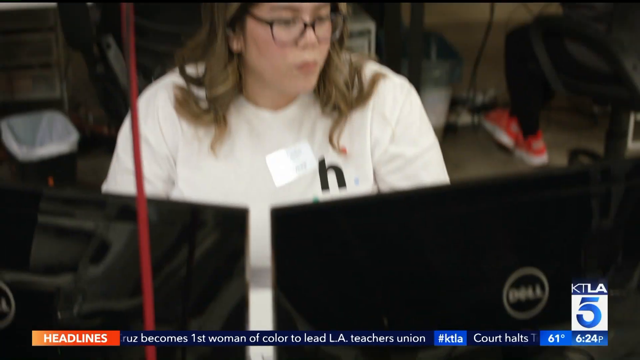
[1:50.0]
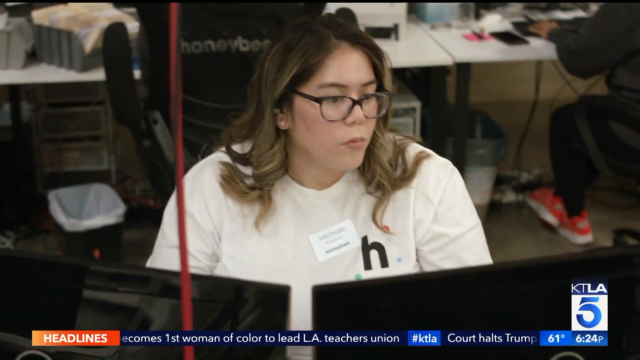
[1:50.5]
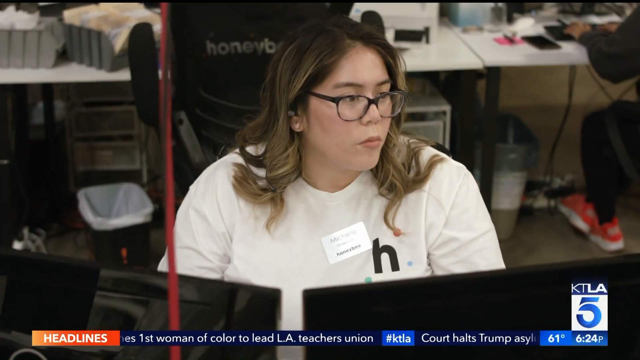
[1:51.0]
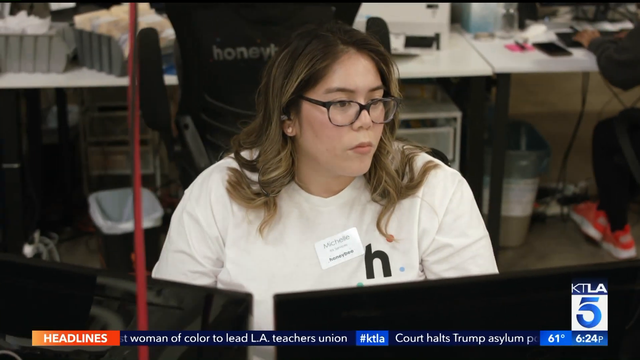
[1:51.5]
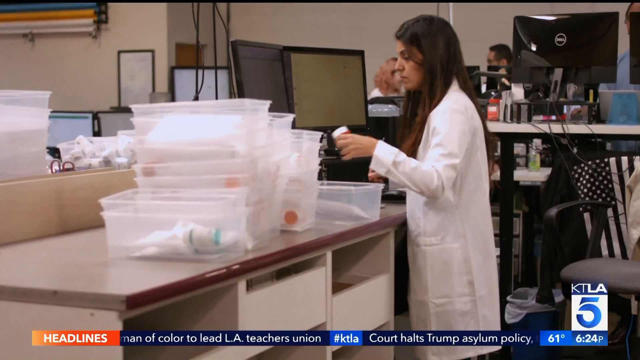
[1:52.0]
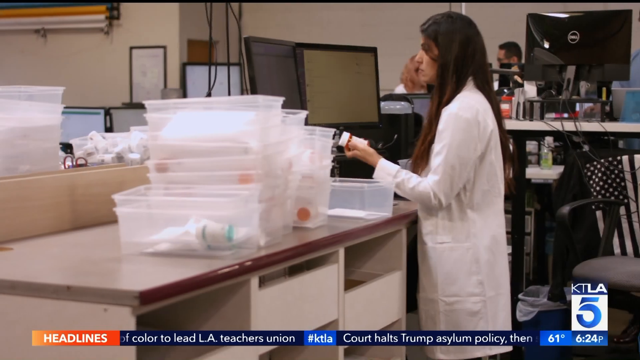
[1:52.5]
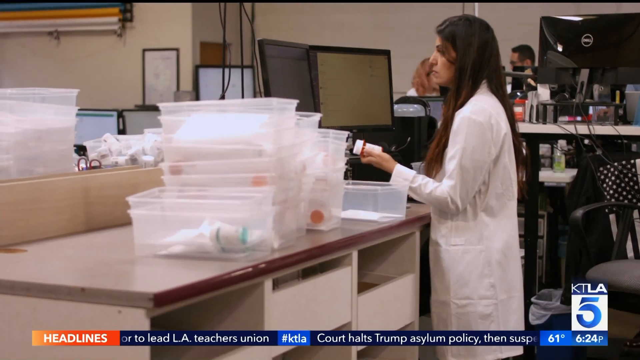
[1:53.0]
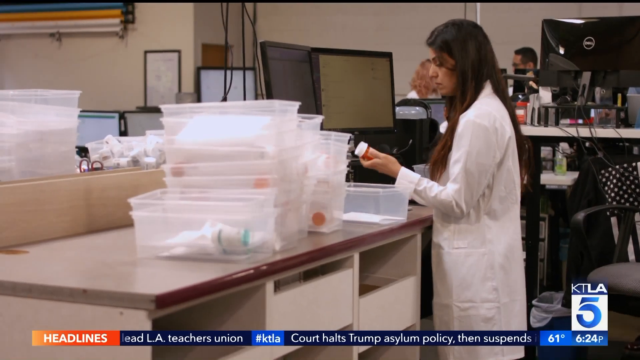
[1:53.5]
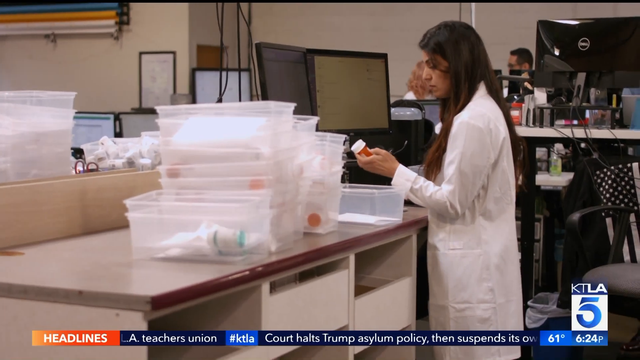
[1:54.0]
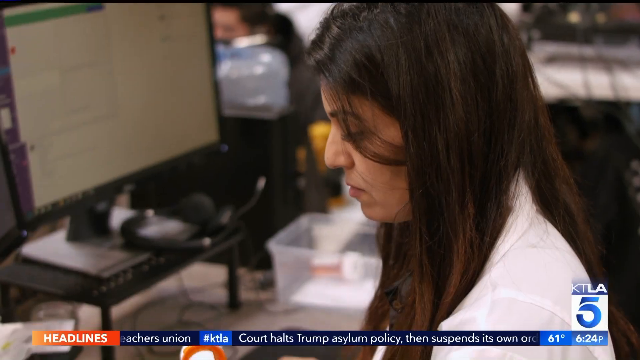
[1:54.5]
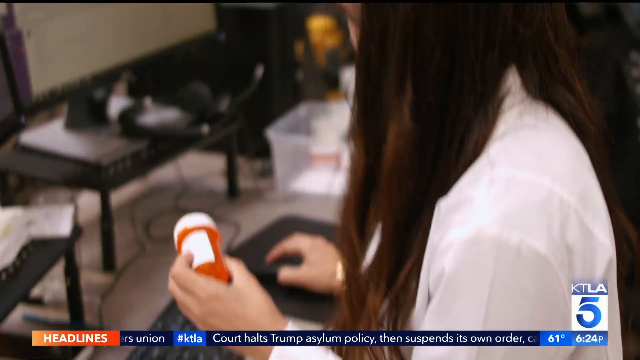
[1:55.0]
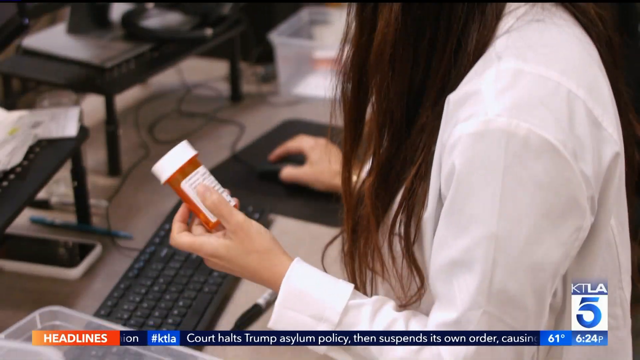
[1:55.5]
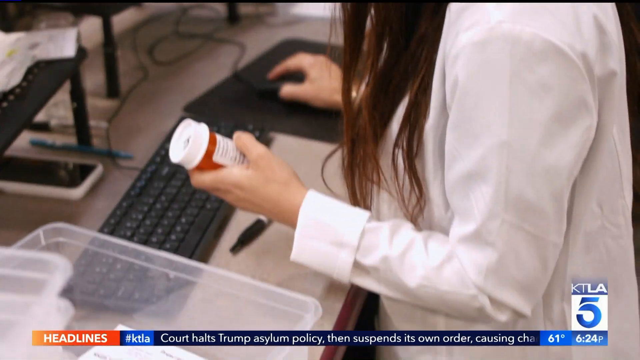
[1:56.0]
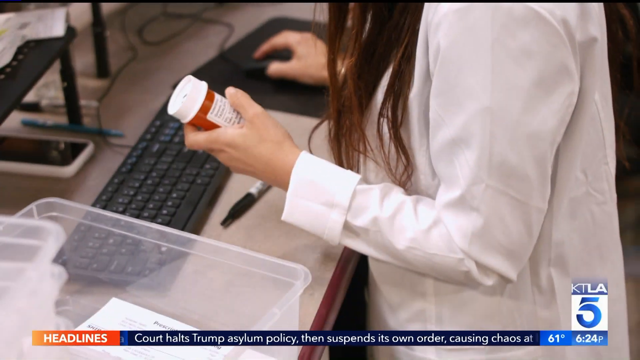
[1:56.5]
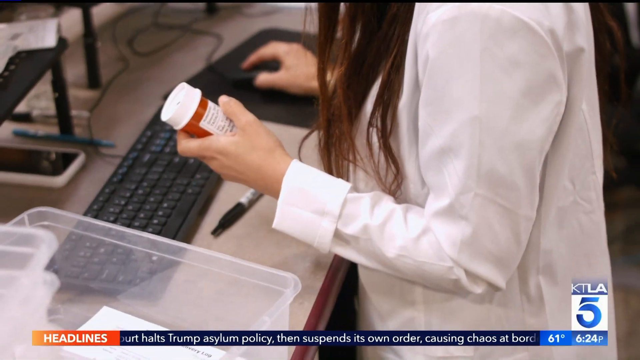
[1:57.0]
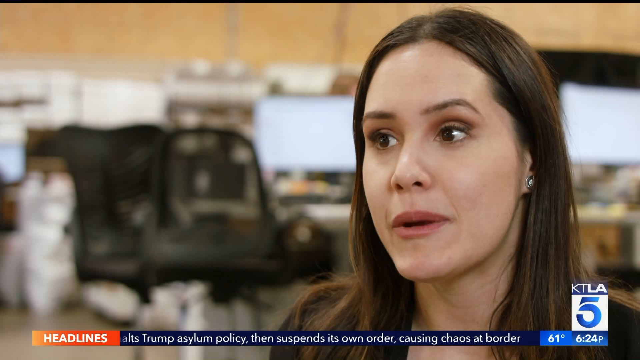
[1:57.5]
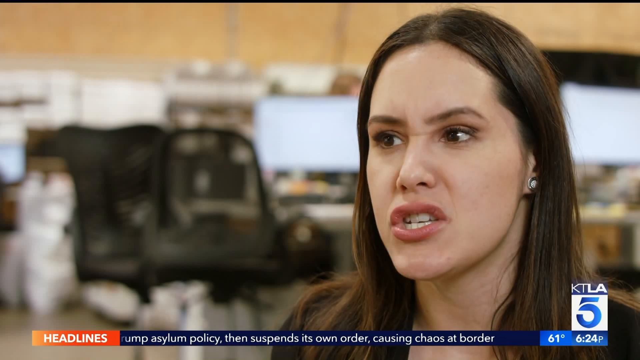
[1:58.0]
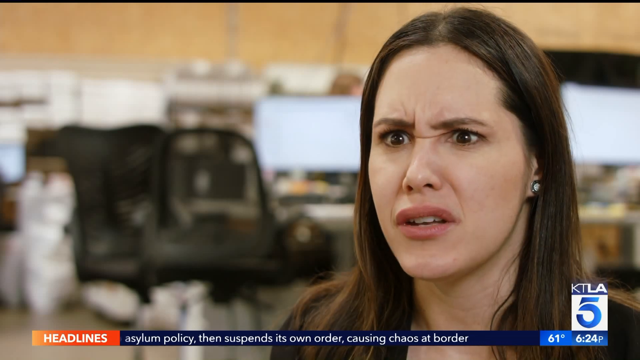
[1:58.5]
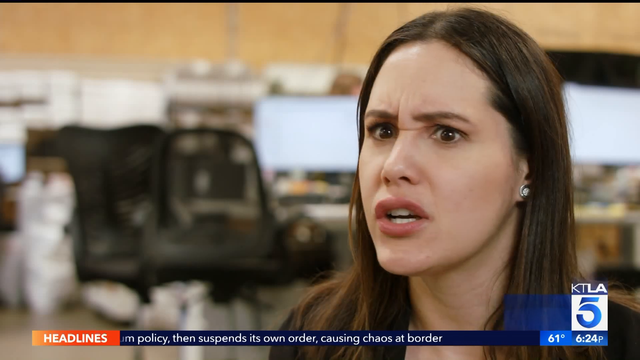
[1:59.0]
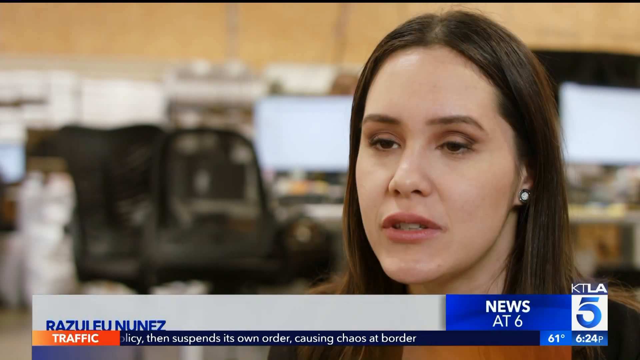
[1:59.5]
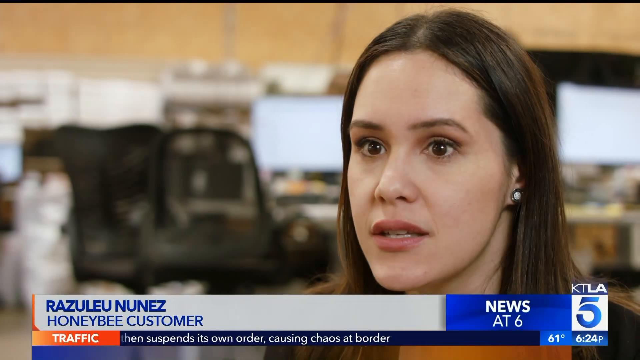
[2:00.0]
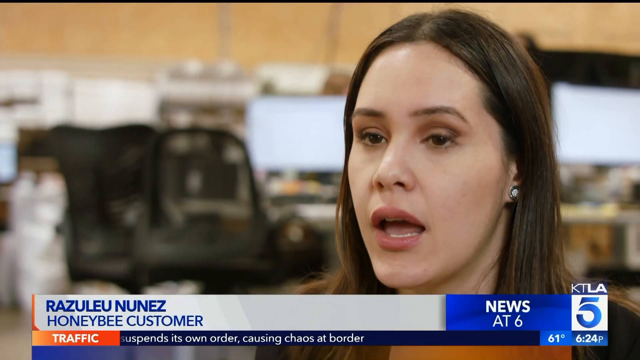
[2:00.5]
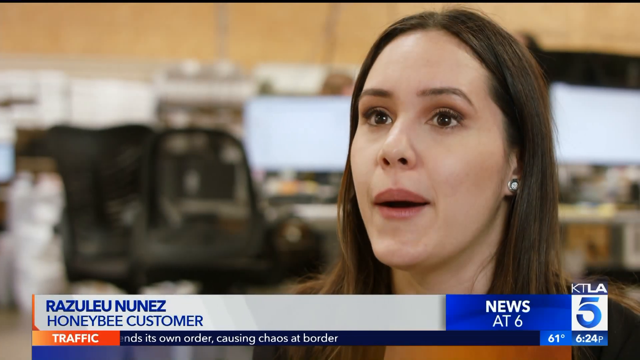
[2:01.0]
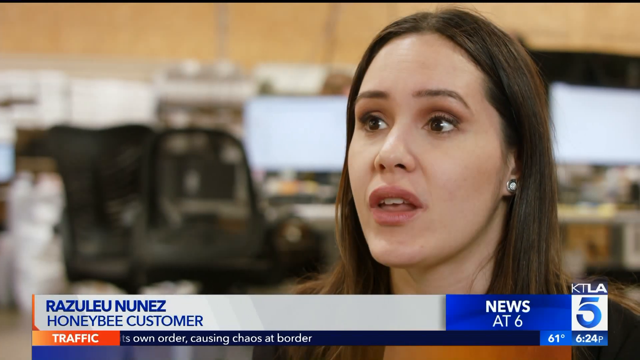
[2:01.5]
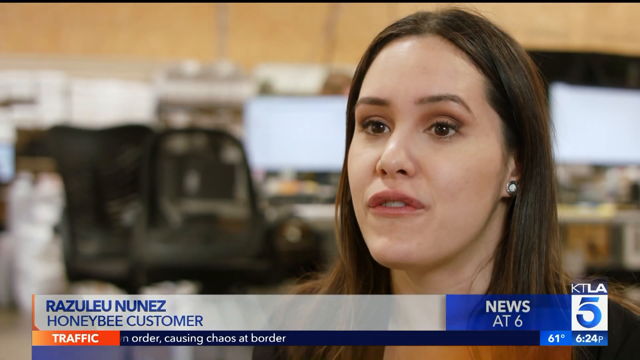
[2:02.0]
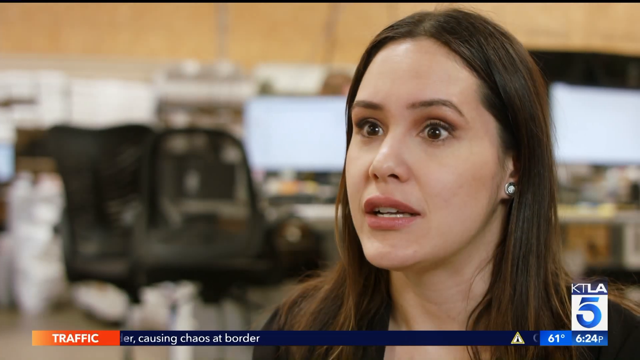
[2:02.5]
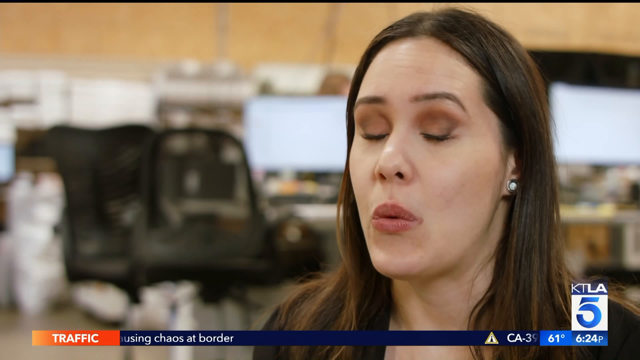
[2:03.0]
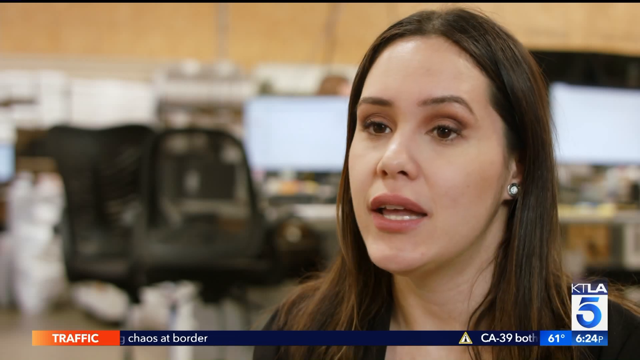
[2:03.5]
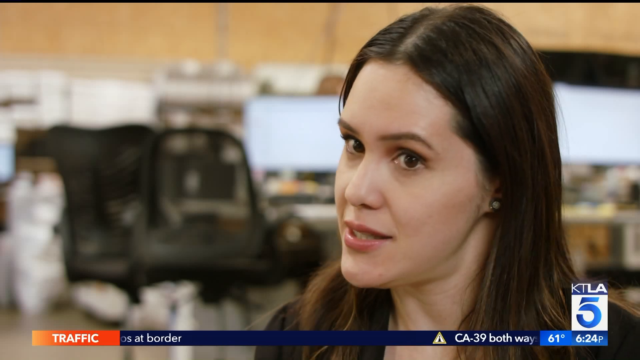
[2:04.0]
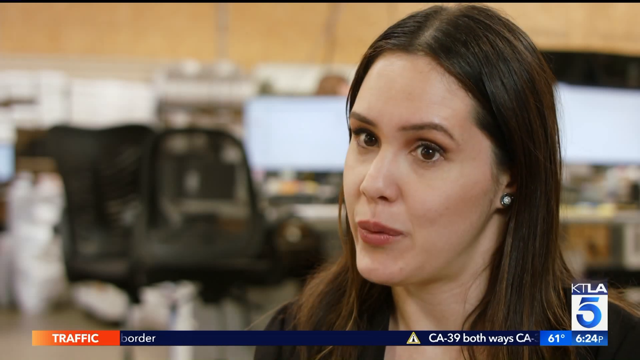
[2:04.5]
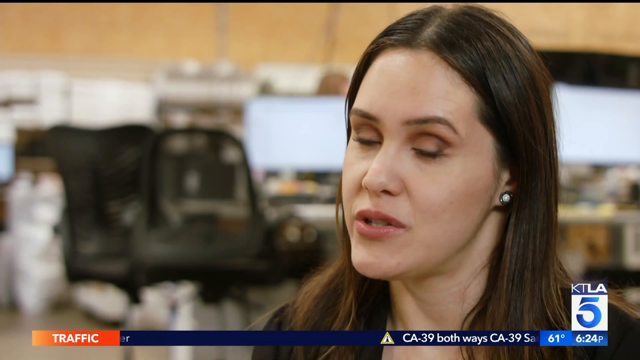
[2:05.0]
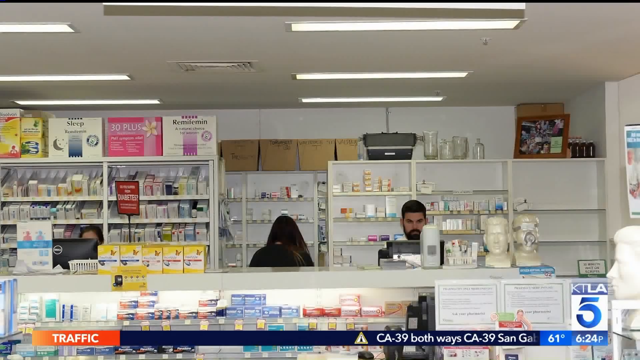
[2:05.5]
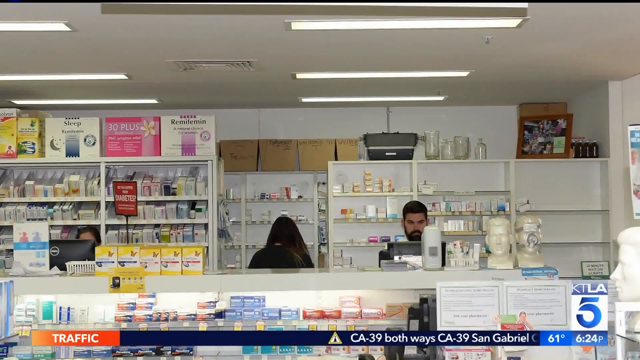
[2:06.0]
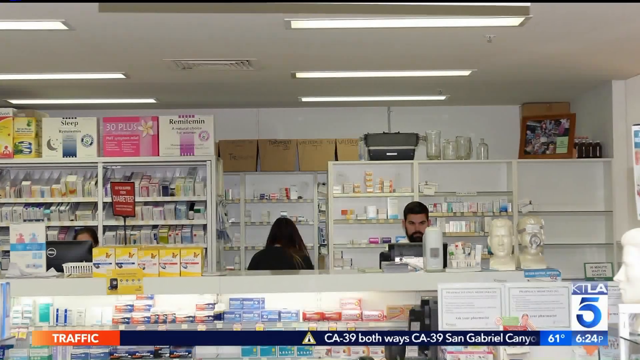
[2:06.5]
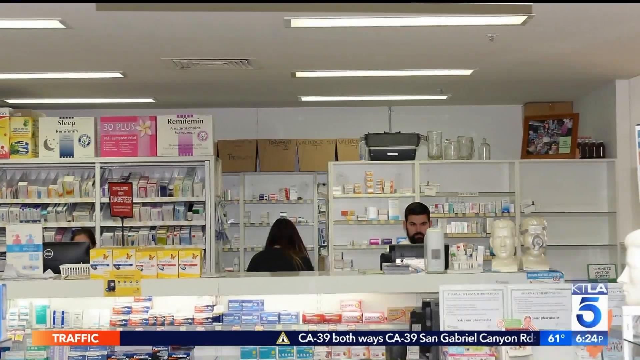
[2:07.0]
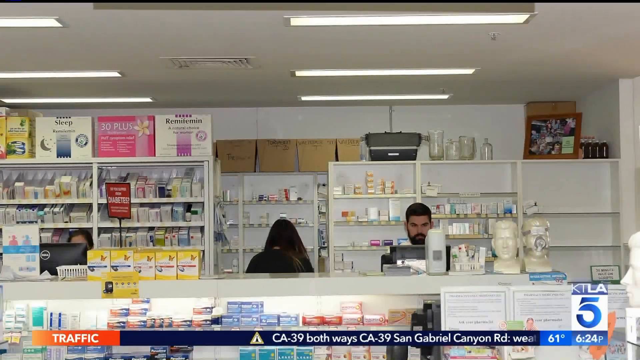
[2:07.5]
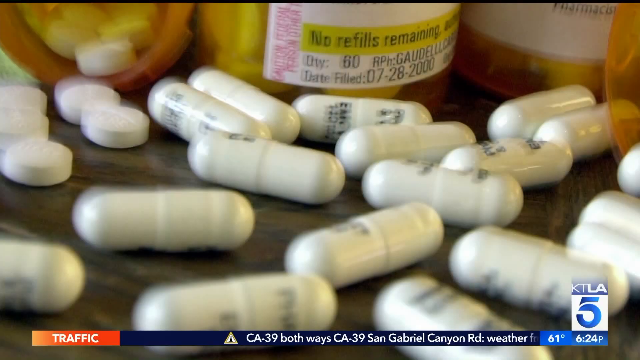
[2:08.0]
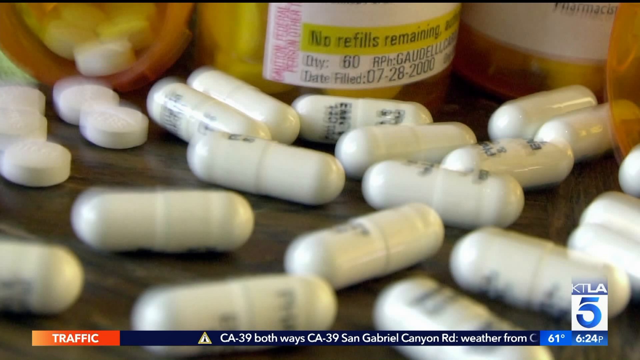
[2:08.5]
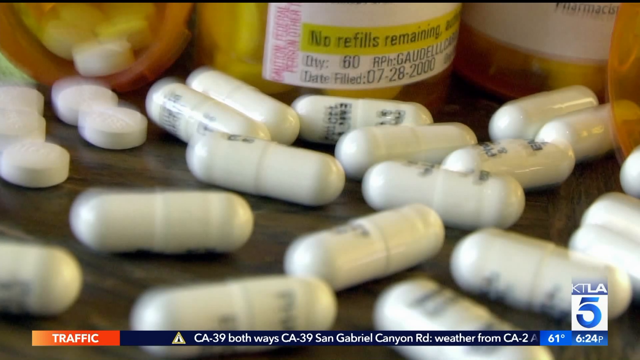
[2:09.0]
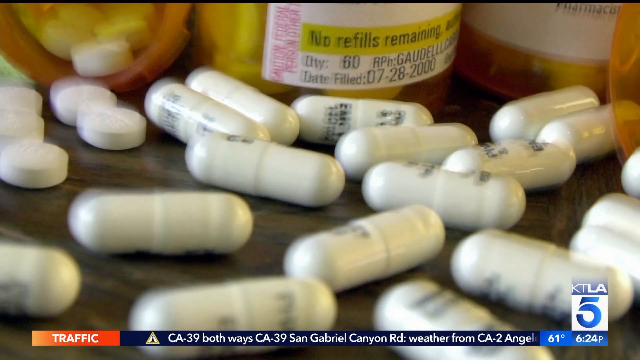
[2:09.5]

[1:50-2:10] A woman sits at a desk working on a computer, wearing a white shirt with a large H in the corner. The camera pans to a different woman standing at a computer desk with two screens in front of her, looking at a pill bottle in her hand and turning it around; several clear rectangular containers are to her left. The camera kind of pans in closer to her before switching to another woman in the call center, with empty swivel computer chairs and several lit-up computer screens behind her; she talks a lot, using her eyes. Next is a different pharmacy with vases and boxes on top of the shelves and traditional shelves full of pills. There are white museum-style heads, one of which wears a CPAP mask. White capsules and white pills with black writing on the capsules are on a countertop.